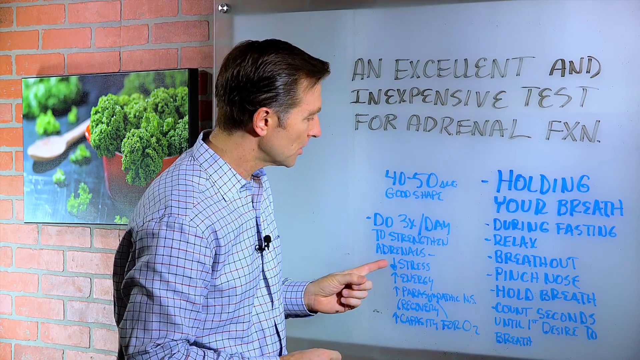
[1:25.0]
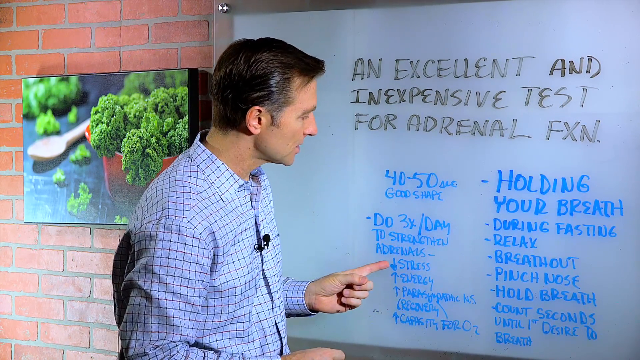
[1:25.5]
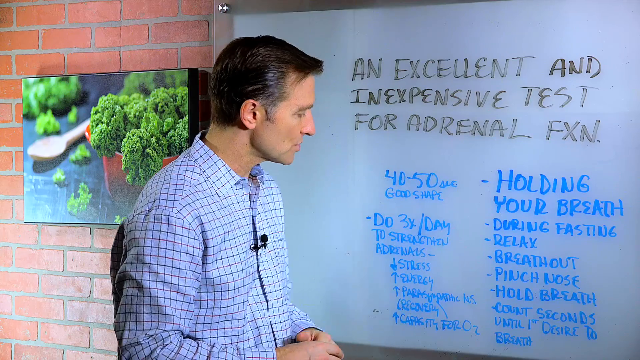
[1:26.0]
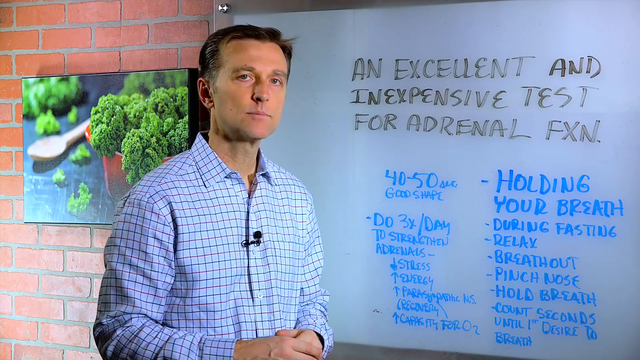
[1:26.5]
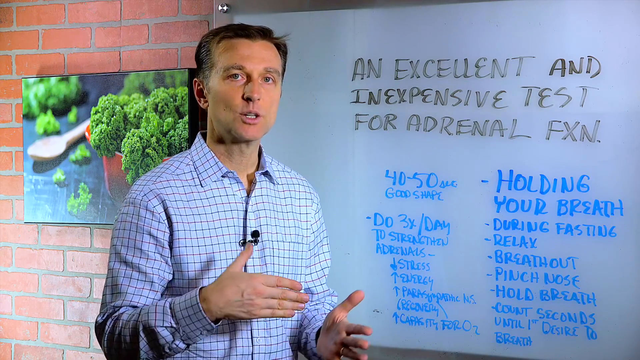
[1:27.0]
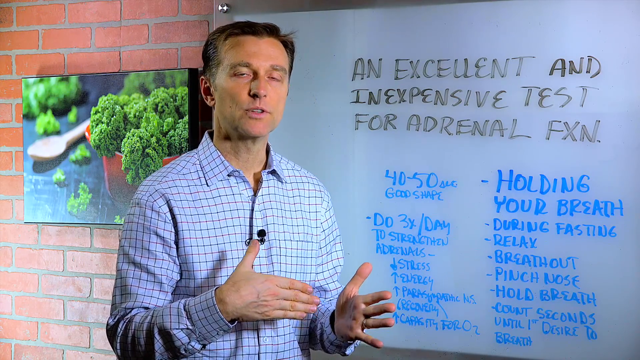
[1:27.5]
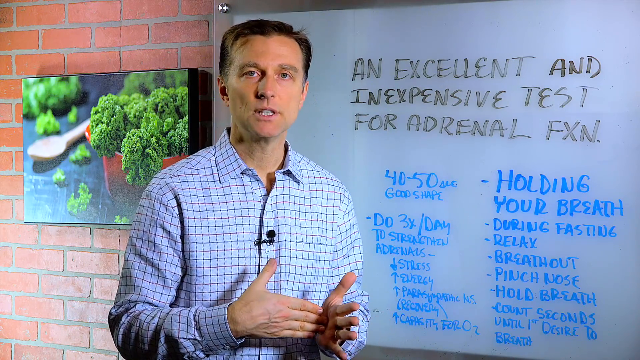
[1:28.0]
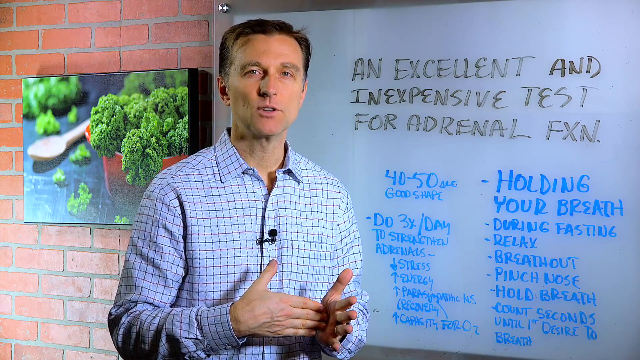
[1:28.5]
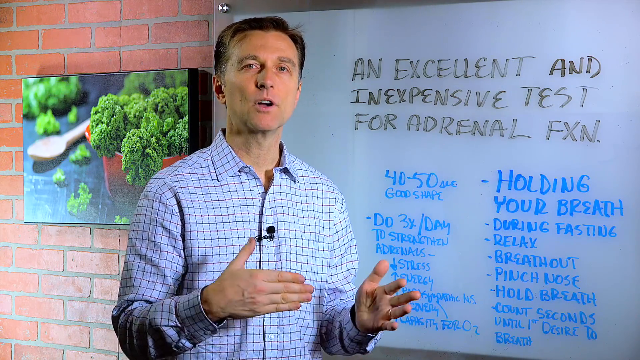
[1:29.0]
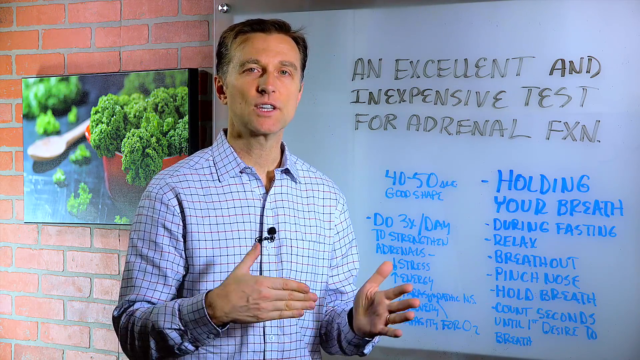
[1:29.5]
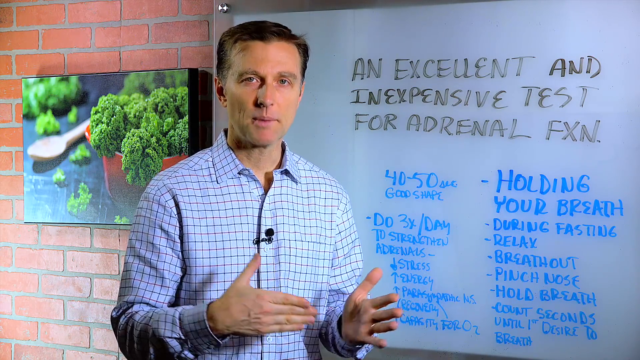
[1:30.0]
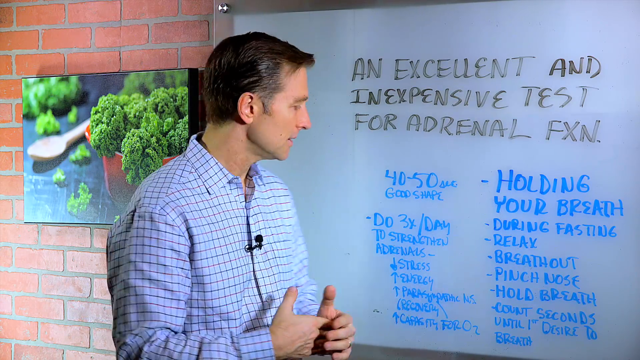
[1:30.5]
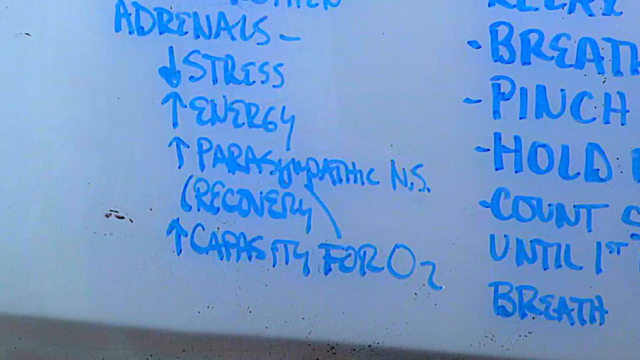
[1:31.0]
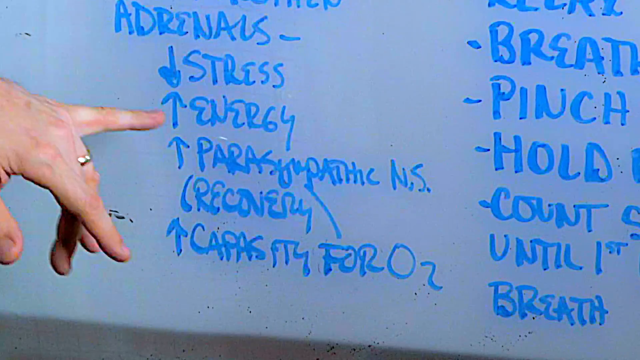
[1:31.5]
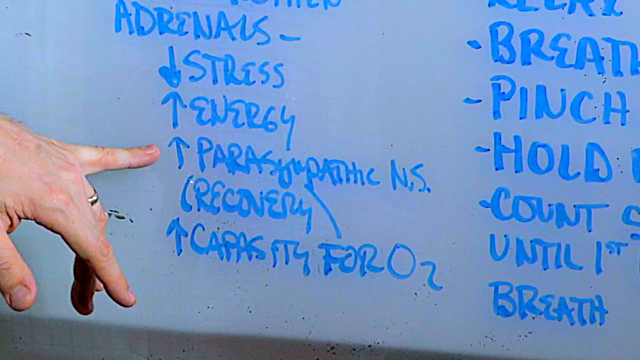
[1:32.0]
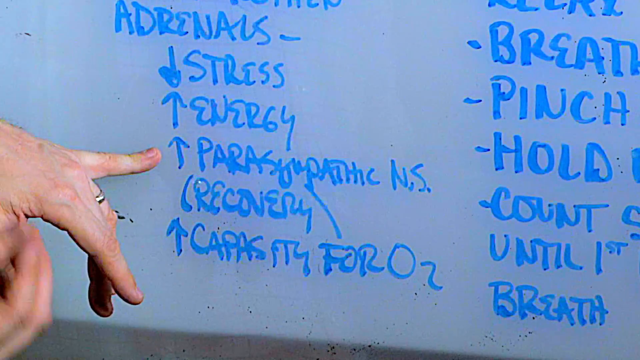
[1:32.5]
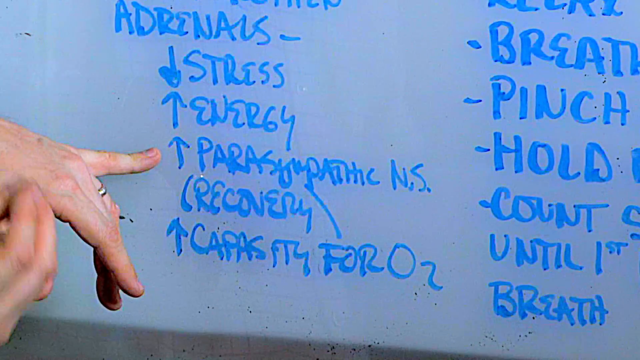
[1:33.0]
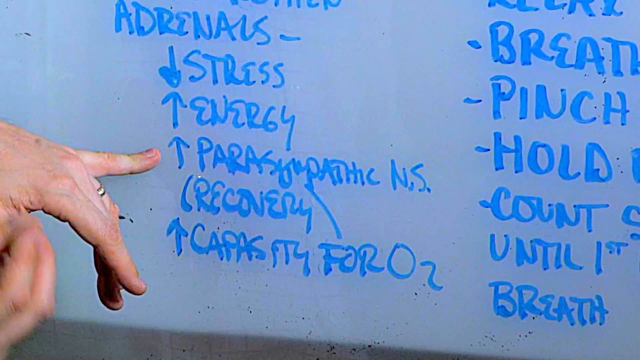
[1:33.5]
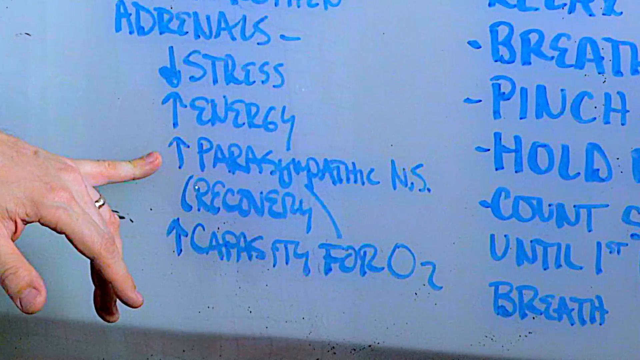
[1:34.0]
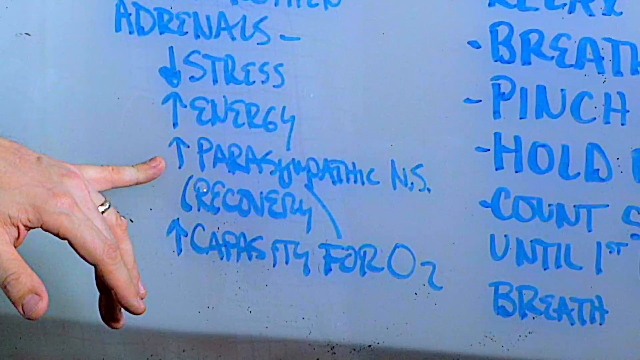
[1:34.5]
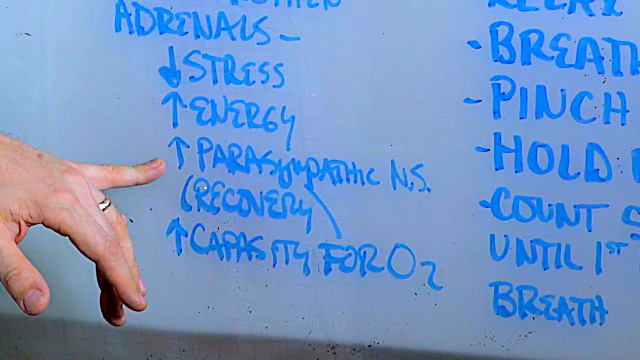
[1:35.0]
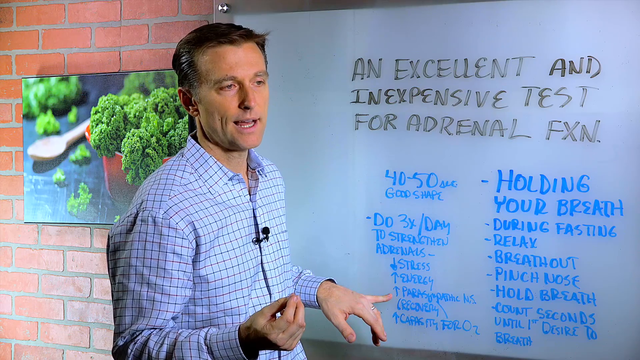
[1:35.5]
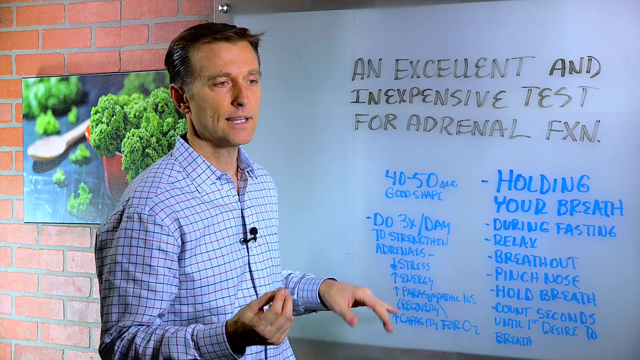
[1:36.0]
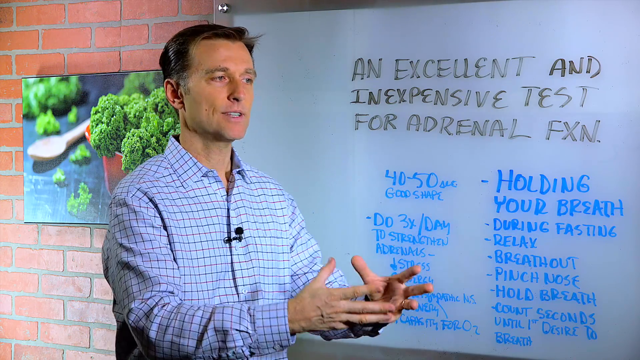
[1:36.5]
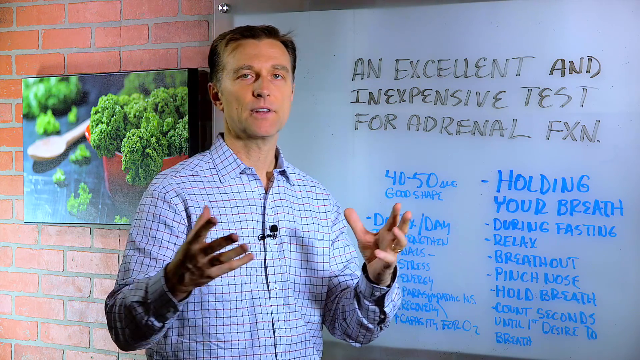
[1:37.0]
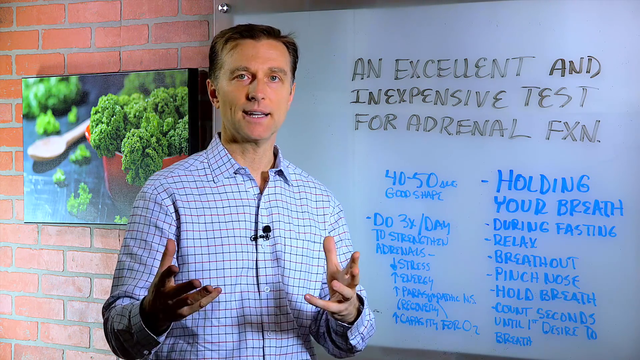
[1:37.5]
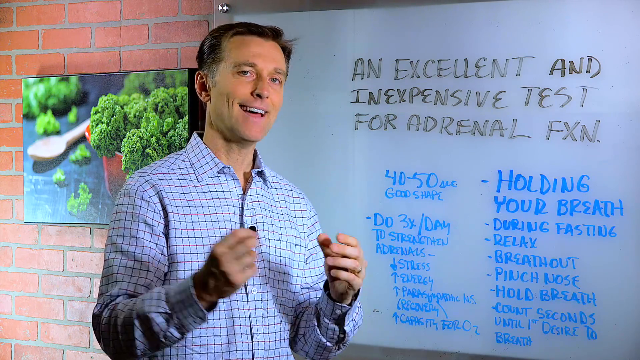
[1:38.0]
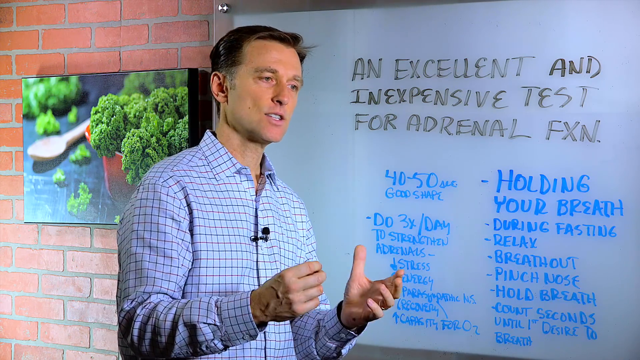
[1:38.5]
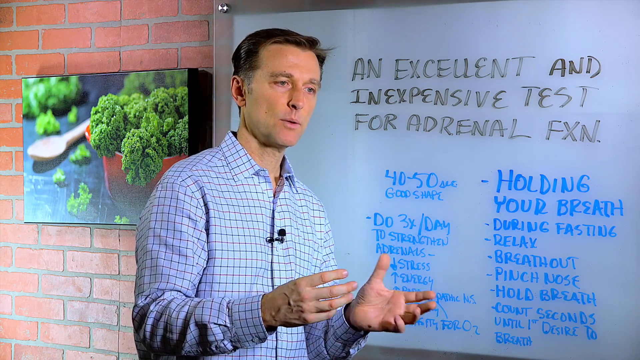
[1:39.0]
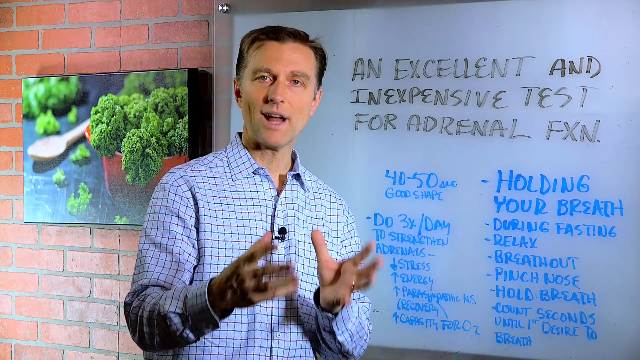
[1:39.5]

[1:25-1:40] The man keeps talking. At the top of the whiteboard, in black ink and capital letters, is written "an excellent and inexpensive test for adrenal FXN". He stands wearing a pale blue shirt with a check pattern and a black microphone clipped to the front. He gestures with both hands, hitting them together. A close-up of the whiteboard shows his little pinky finger pointing to words in capital letters: "Parasympathic NS". The camera focuses back on the man as he continues to speak, pointing with his left hand to different words on the whiteboard and gesturing with his right hand.